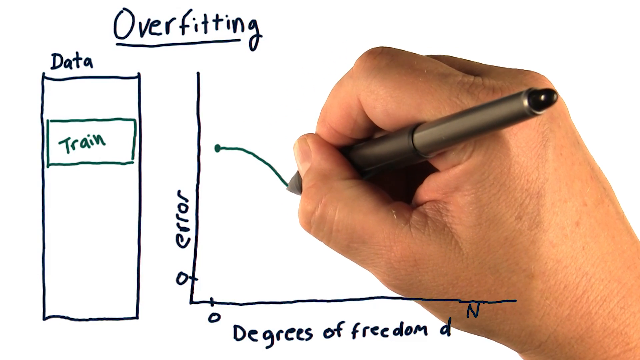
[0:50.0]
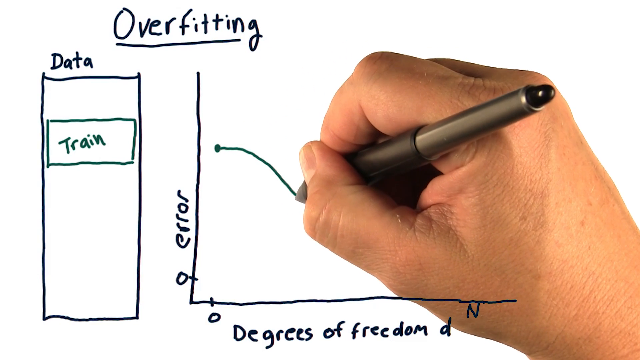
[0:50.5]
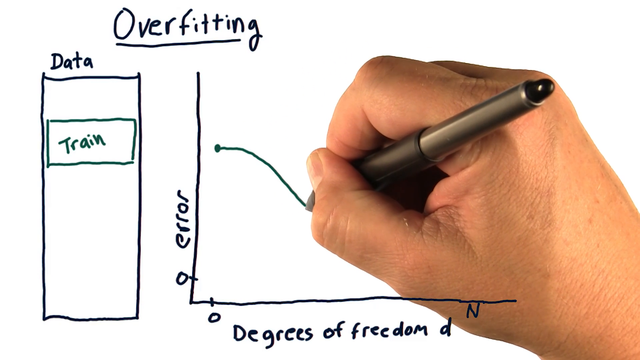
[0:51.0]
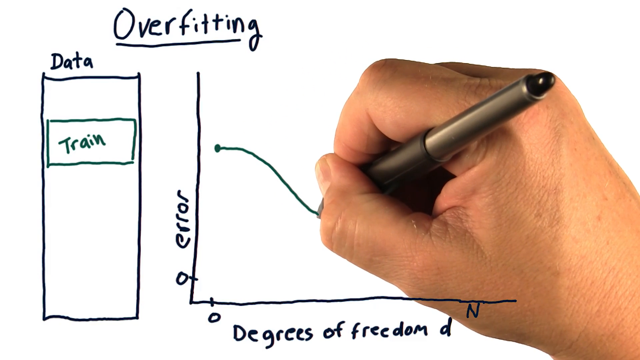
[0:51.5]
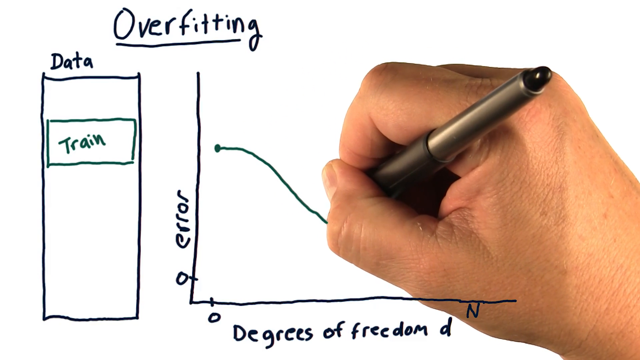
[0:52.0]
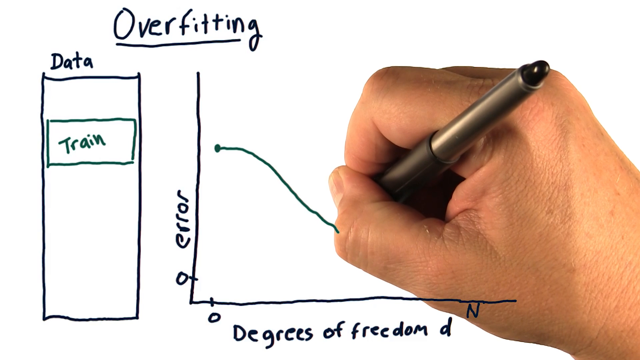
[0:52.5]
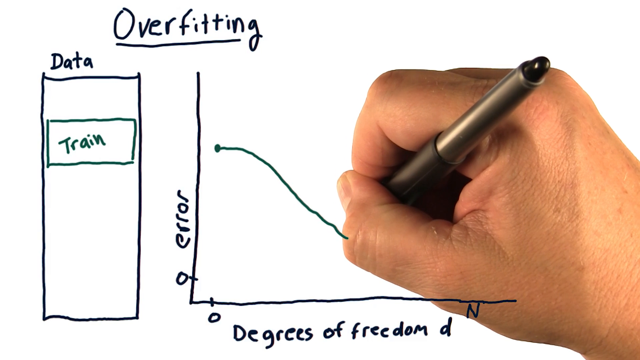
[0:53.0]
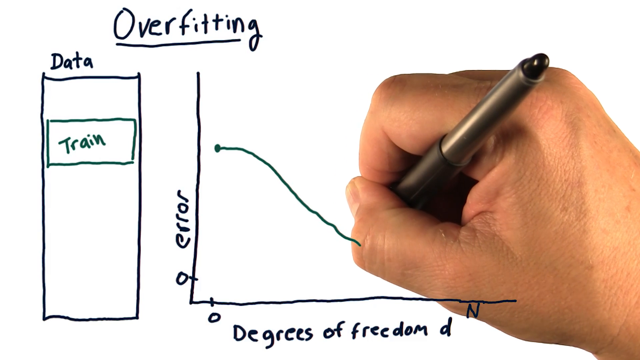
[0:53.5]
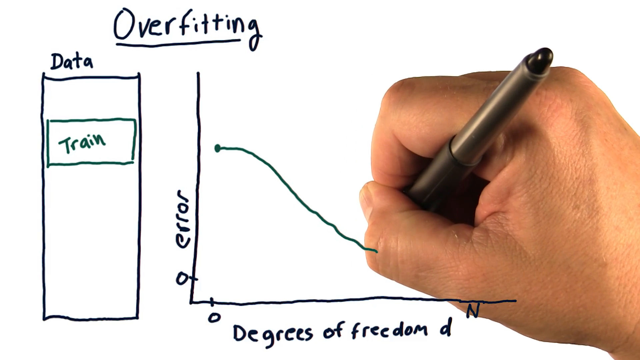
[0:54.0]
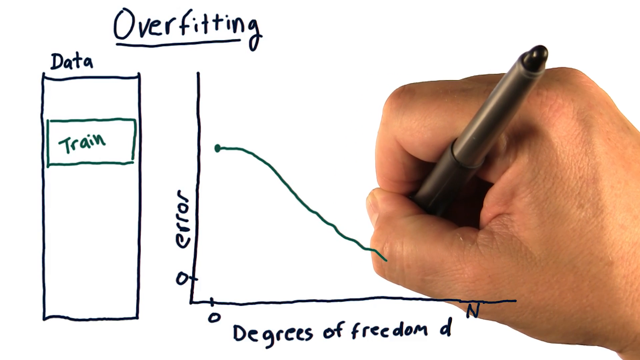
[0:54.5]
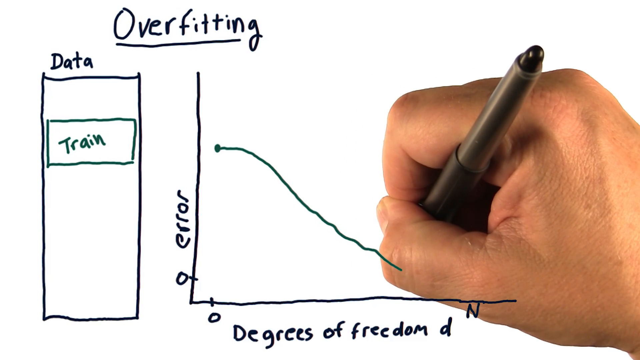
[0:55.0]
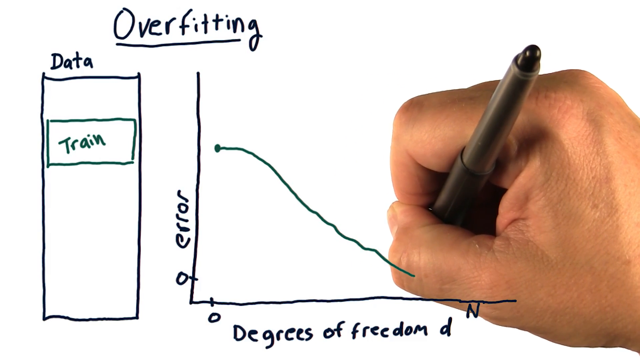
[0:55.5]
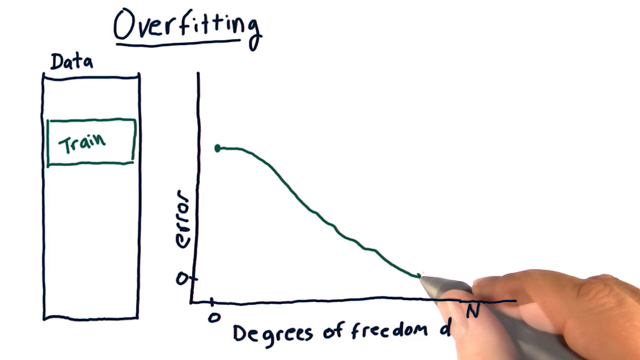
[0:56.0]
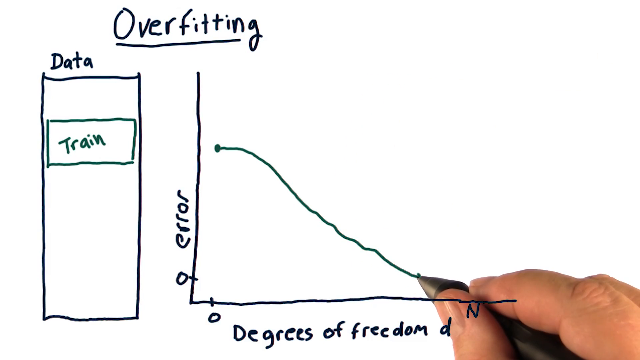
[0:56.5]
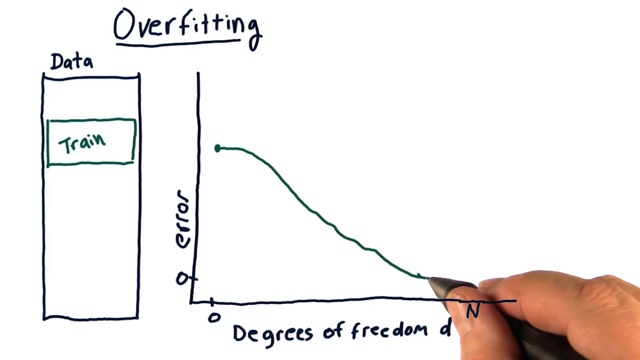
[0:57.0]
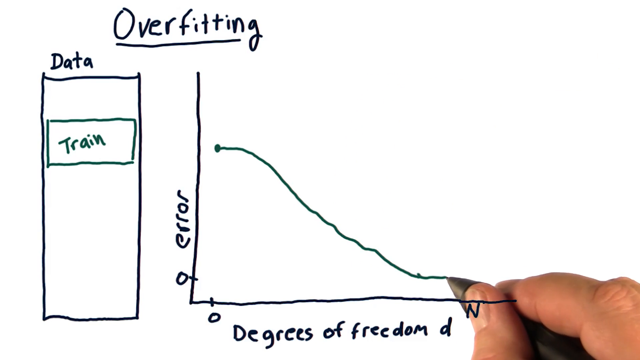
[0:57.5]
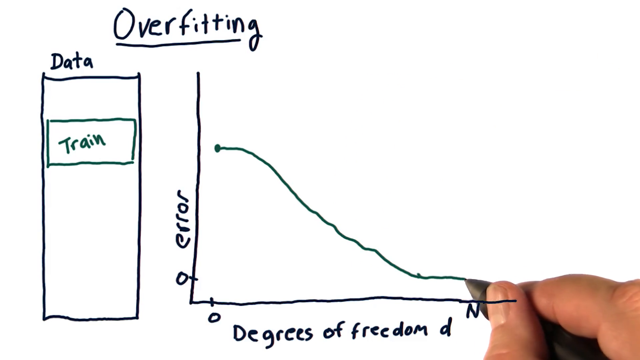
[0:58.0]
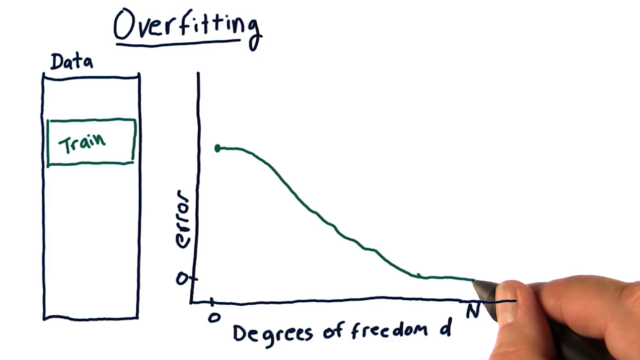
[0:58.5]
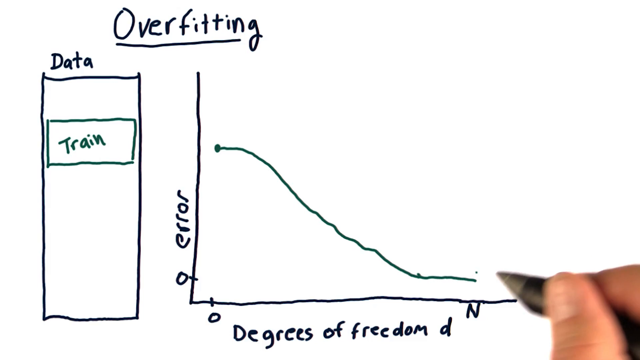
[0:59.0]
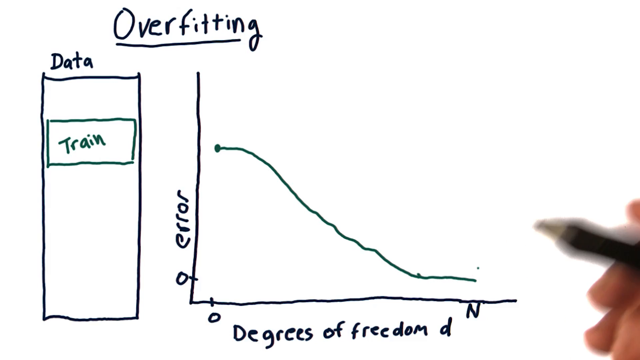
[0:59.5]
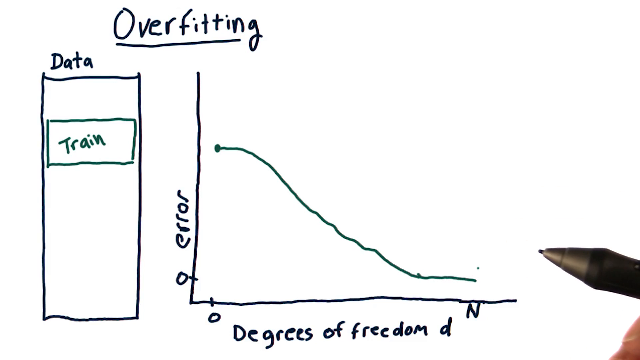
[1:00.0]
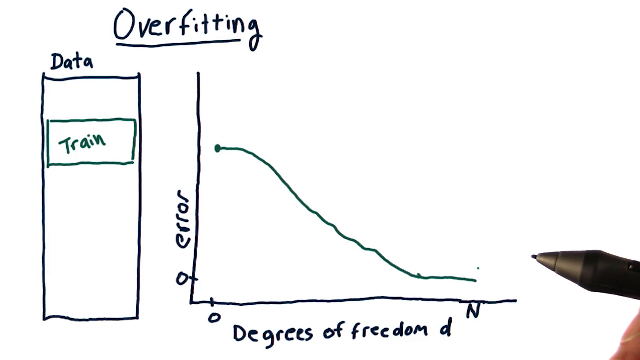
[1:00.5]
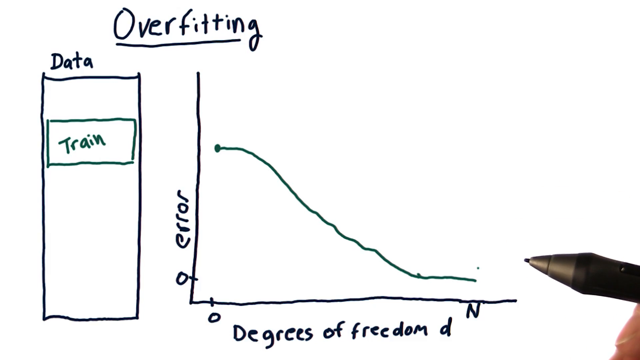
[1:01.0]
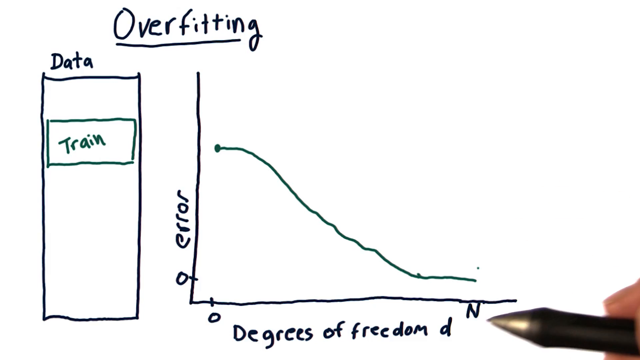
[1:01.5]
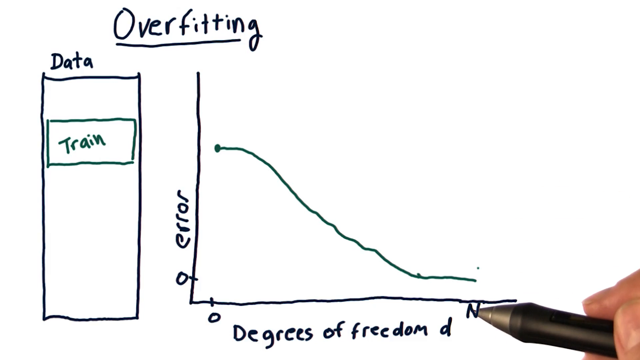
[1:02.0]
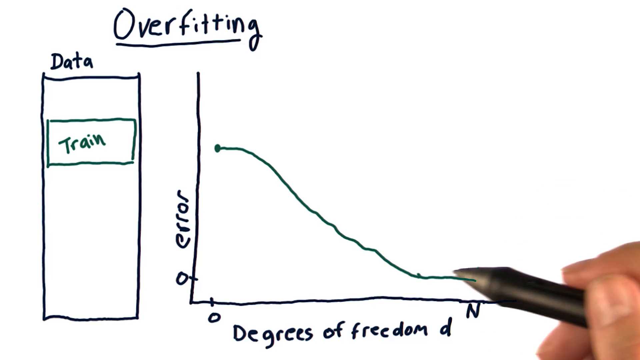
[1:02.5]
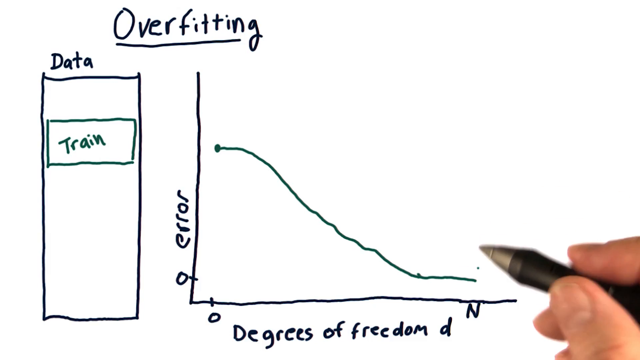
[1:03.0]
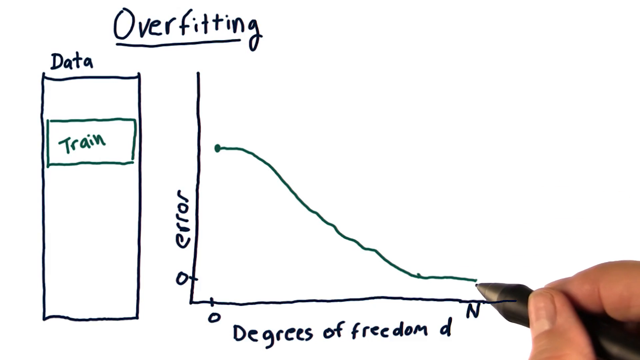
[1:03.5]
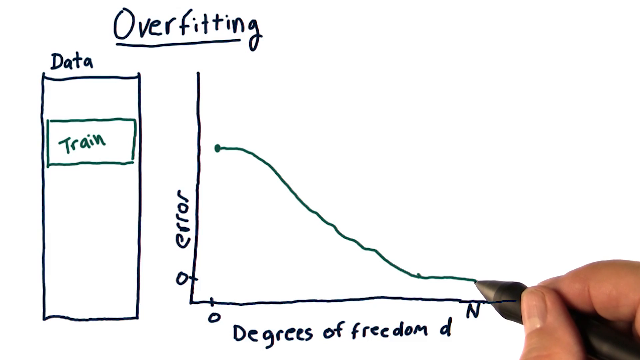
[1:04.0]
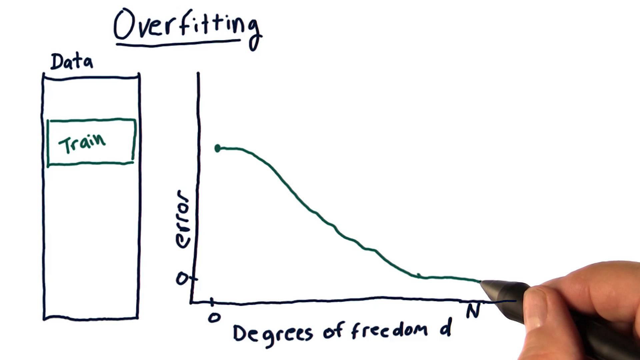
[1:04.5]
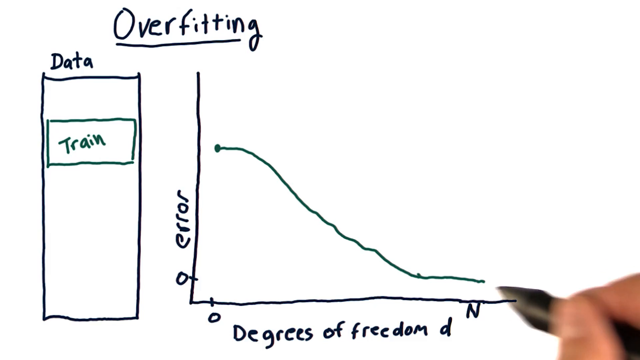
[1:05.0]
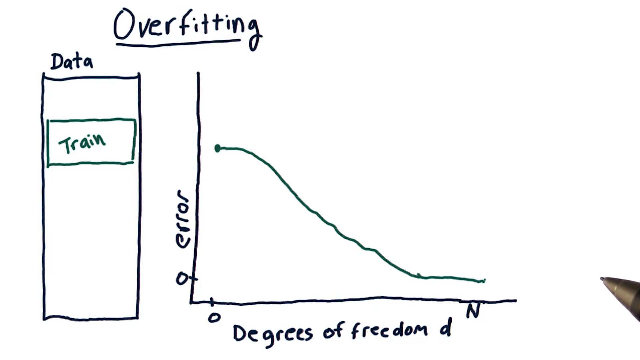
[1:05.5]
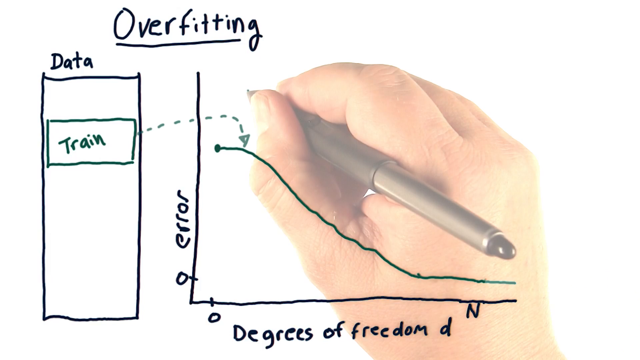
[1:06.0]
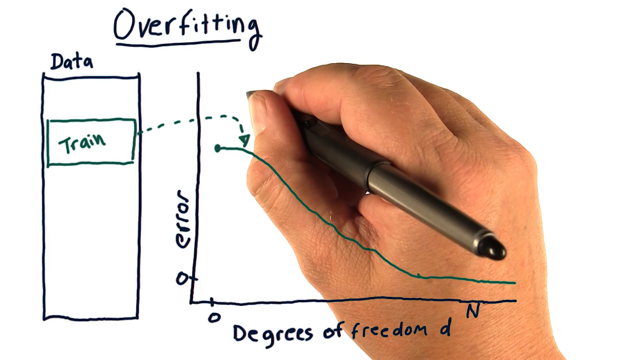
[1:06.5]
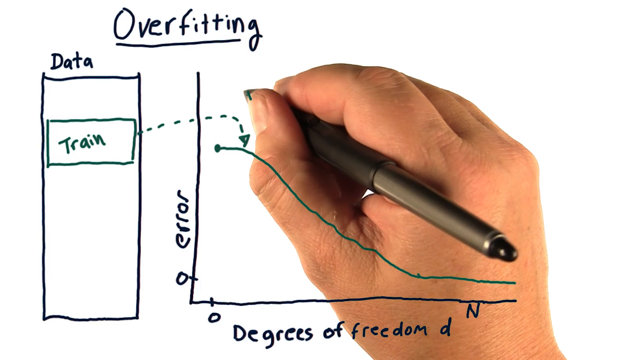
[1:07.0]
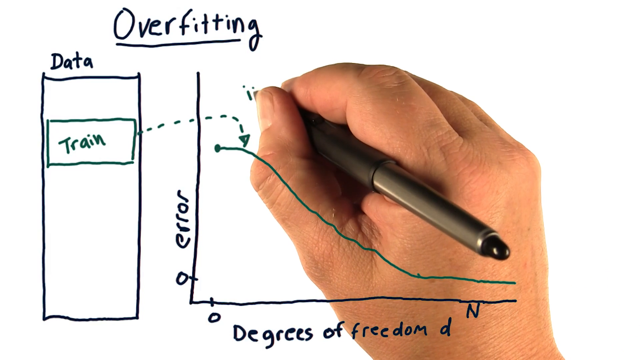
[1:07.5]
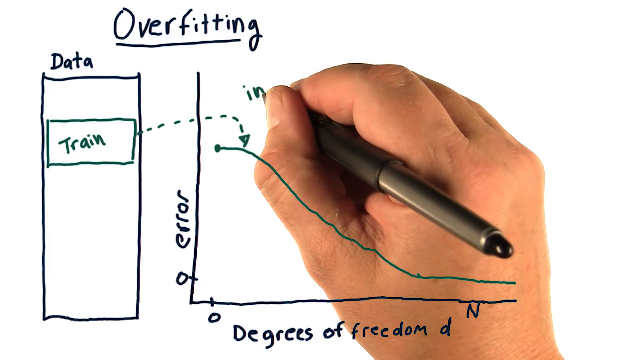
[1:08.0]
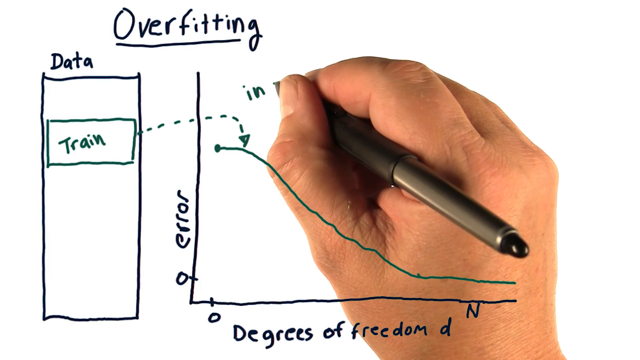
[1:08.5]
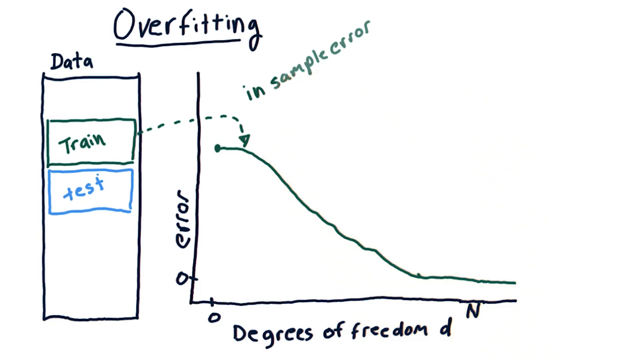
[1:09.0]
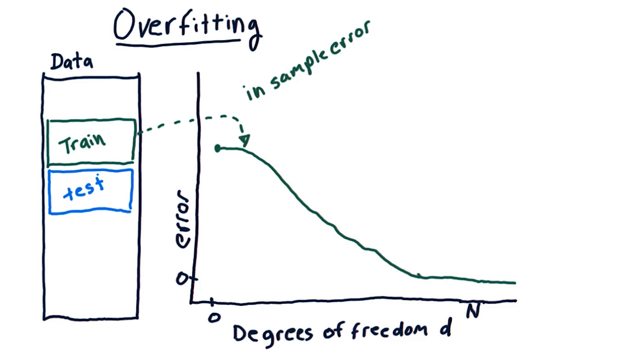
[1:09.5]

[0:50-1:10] A hand-drawn graph appears with the underlined title "overfitting" at the top. On the left is a vertical rectangle with "data" on top of it; inside it there appears to be a smaller green rectangle reading "train". The graph occupies the middle and right side of the frame: the y-axis is apparently labeled "error" with 0 at the bottom, and the x-axis has 0 on the left, N on the right, and is labeled "degrees of freedom D". Throughout, a hand seems to come from the bottom right and draw on the graph; the graph appears to be overlaid, so the hand is underneath it and the graph lines show over the hand. At the beginning, the right hand is drawing what looks like a green line, starting almost at the top of the y-axis at zero on the x-axis and curving downward at a negative angle toward the bottom right. When it reaches the right side of the graph, it levels out into a horizontal line around zero on the y-axis. Suddenly a dotted arrow appears from the green "train" rectangle, pointing down to the green line. The right hand, holding the pen, writes "in sample error" in green text above the green line. Then a blue rectangle reading "test" appears below the green train rectangle.